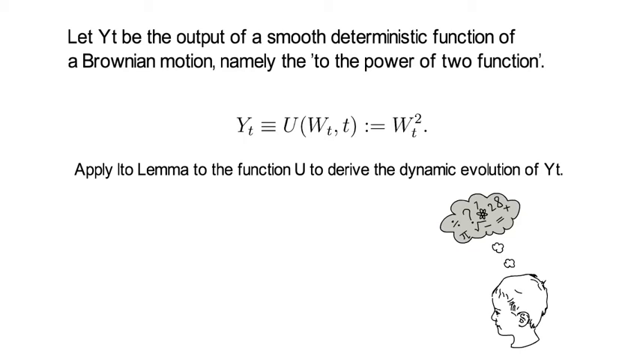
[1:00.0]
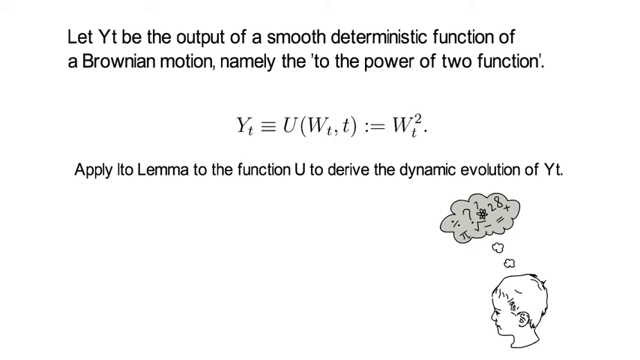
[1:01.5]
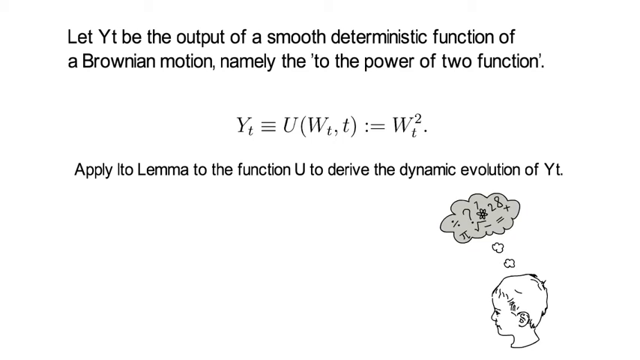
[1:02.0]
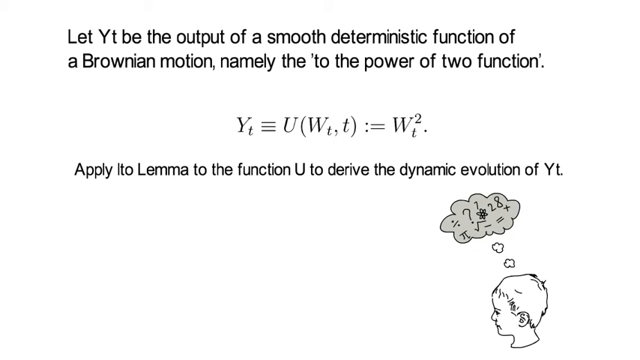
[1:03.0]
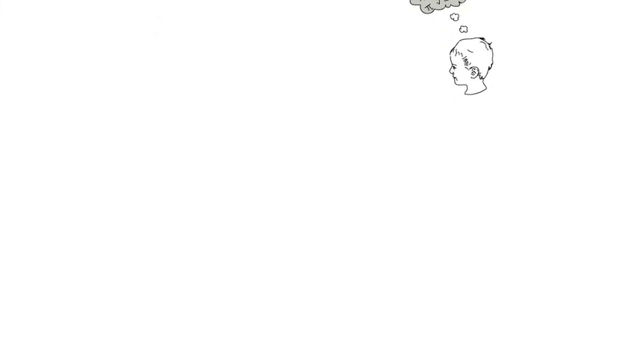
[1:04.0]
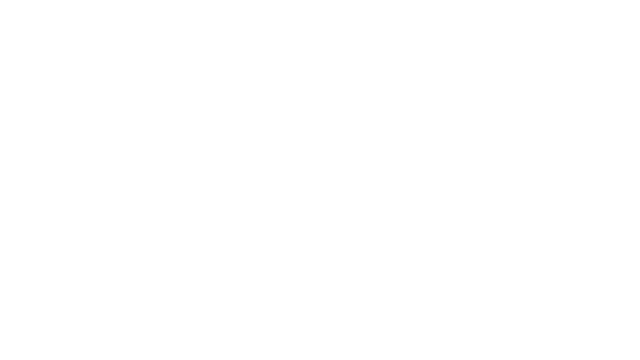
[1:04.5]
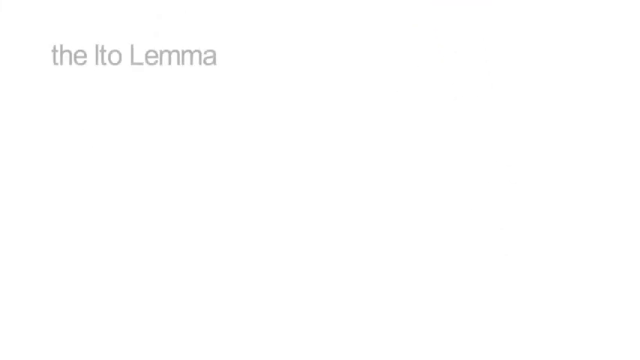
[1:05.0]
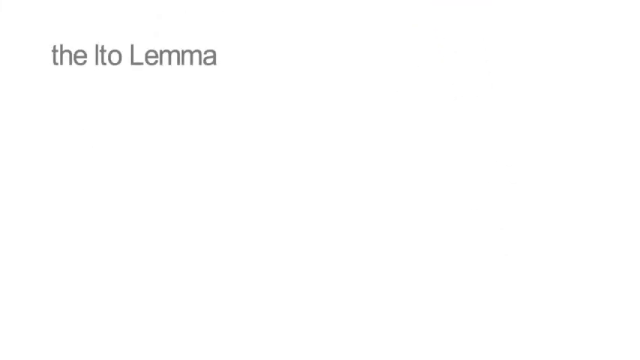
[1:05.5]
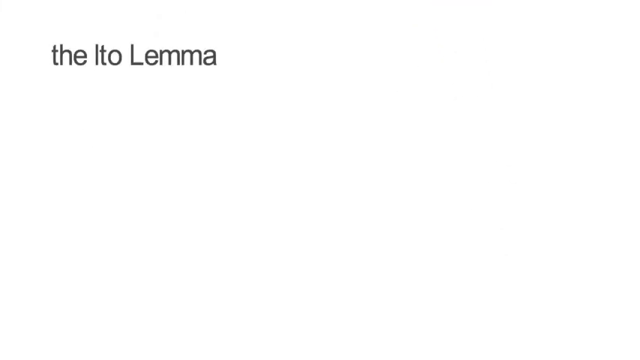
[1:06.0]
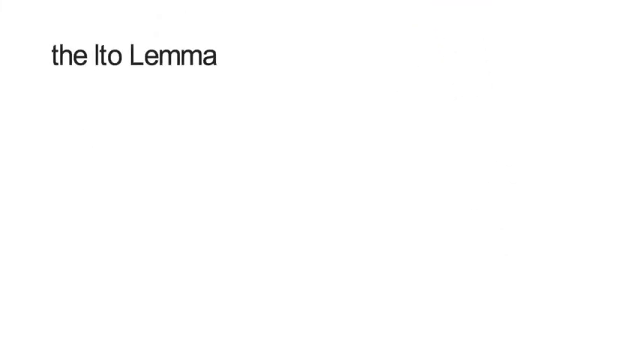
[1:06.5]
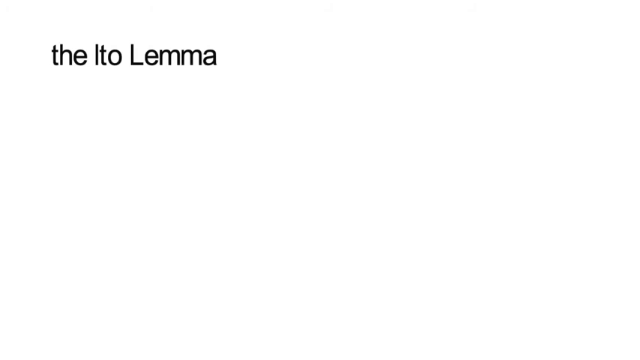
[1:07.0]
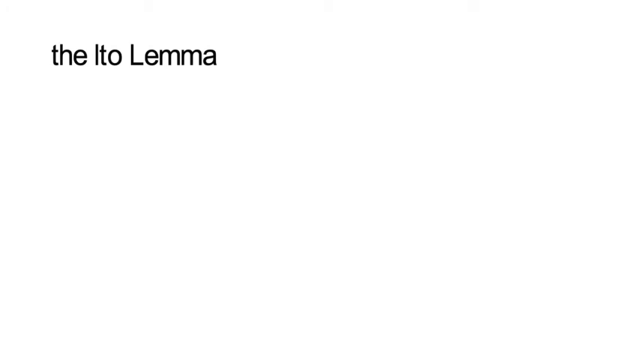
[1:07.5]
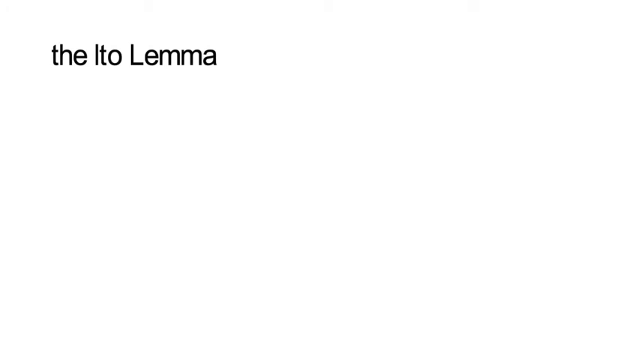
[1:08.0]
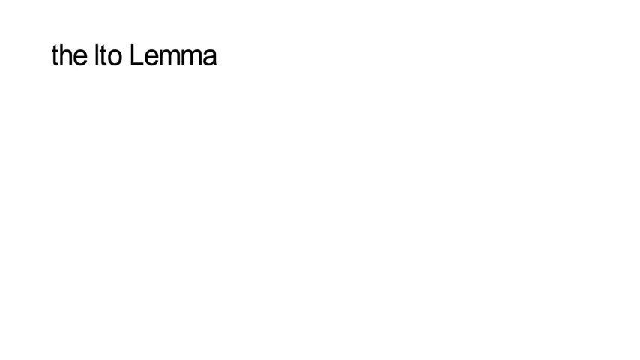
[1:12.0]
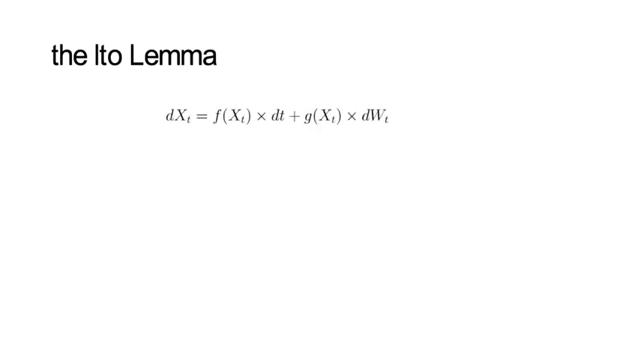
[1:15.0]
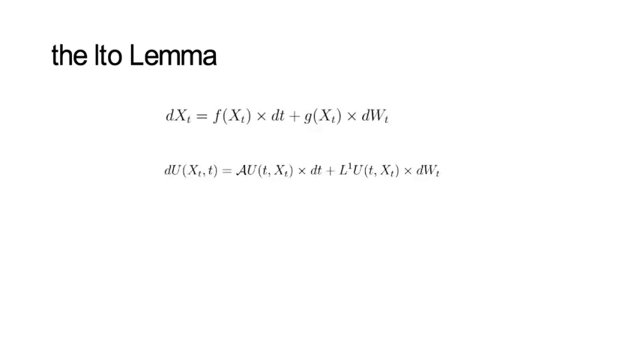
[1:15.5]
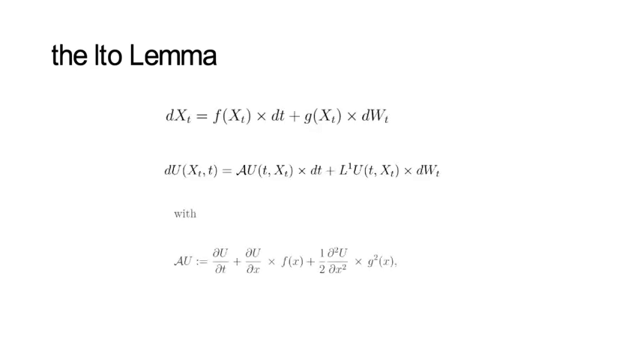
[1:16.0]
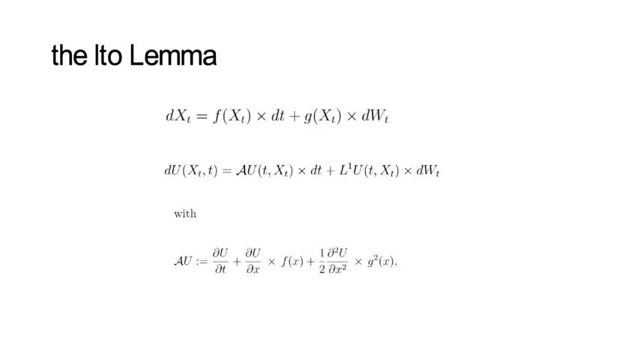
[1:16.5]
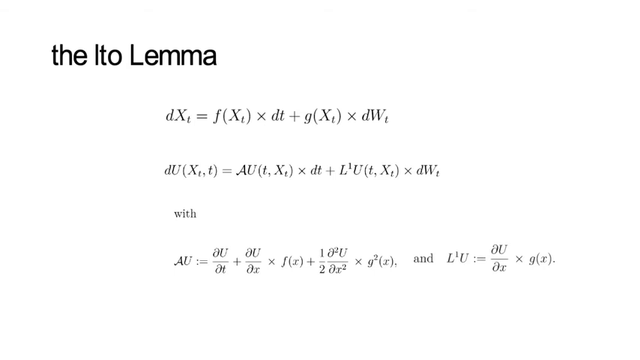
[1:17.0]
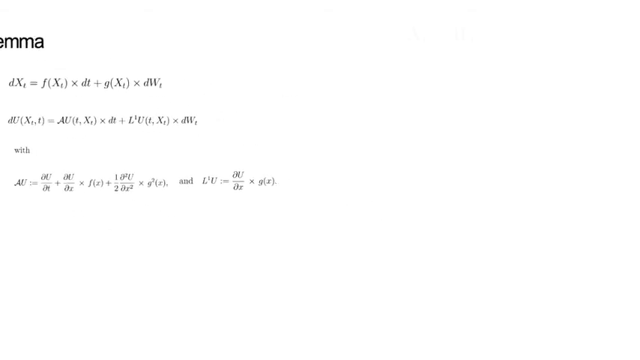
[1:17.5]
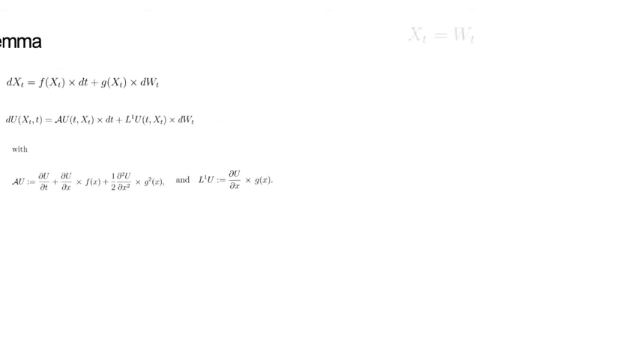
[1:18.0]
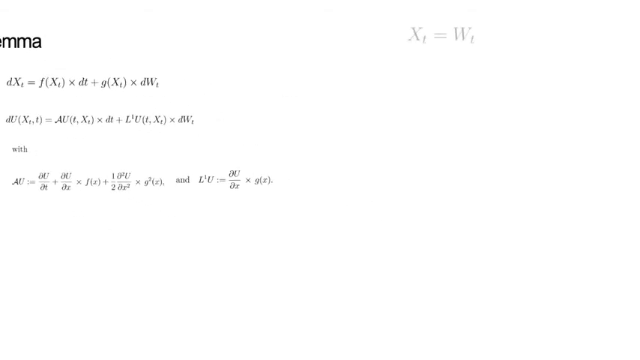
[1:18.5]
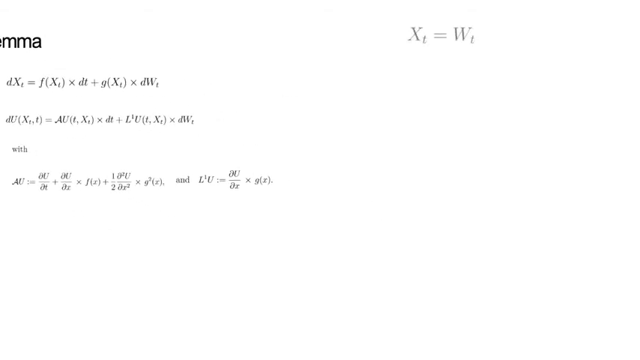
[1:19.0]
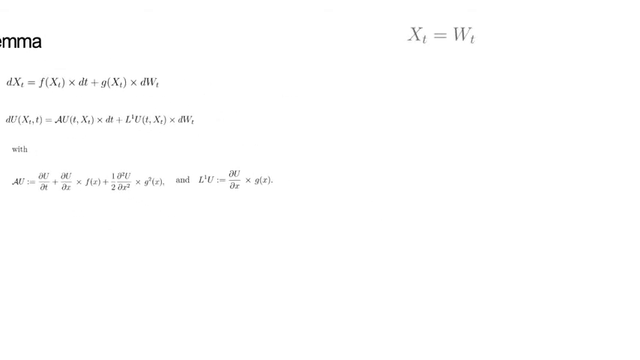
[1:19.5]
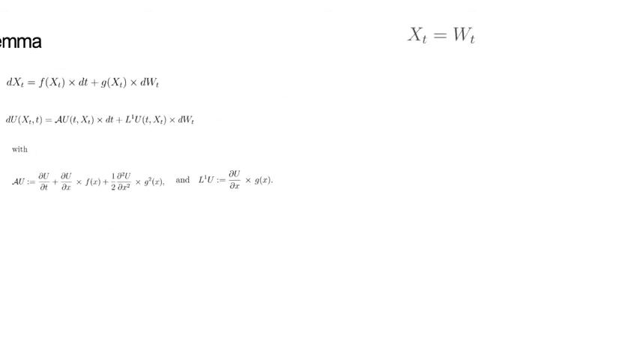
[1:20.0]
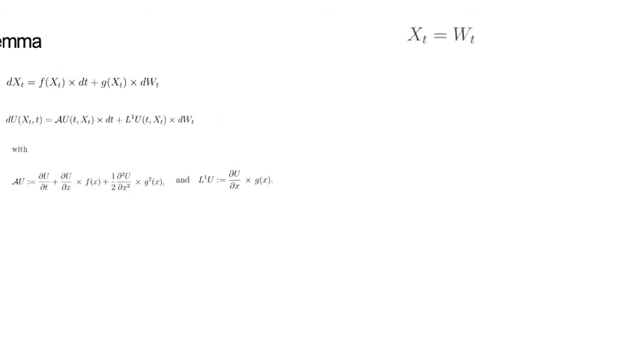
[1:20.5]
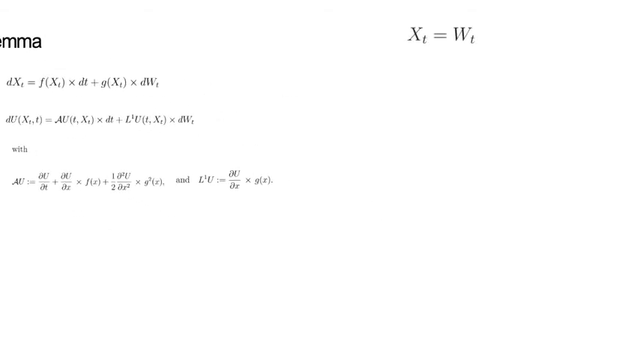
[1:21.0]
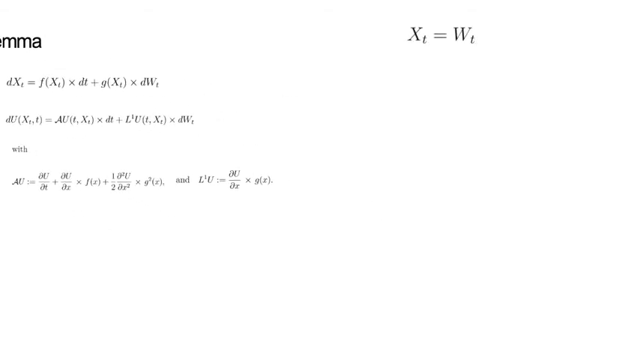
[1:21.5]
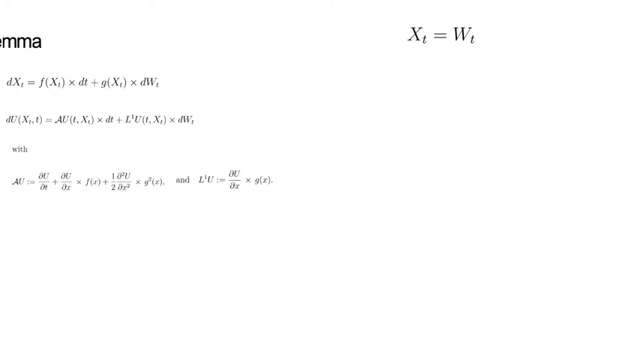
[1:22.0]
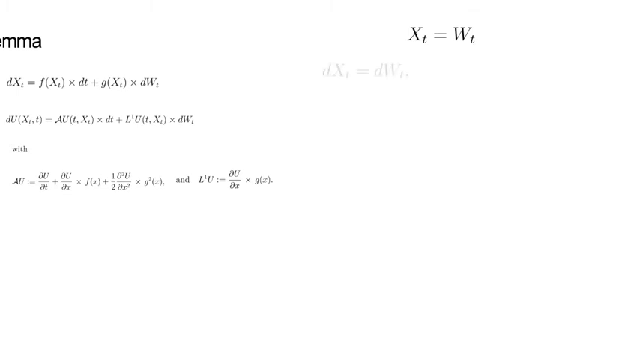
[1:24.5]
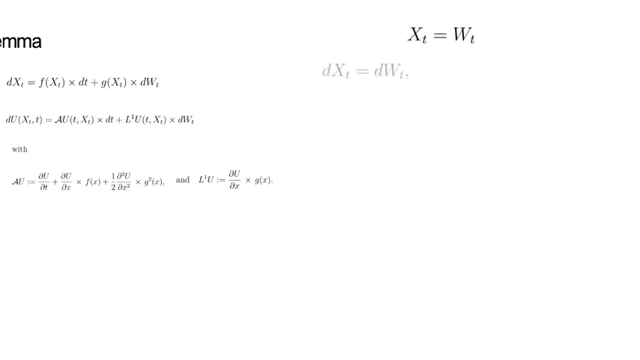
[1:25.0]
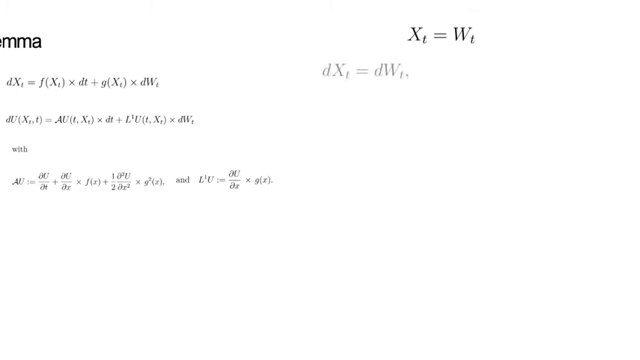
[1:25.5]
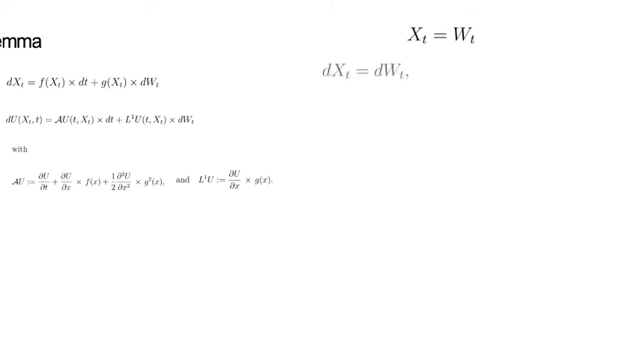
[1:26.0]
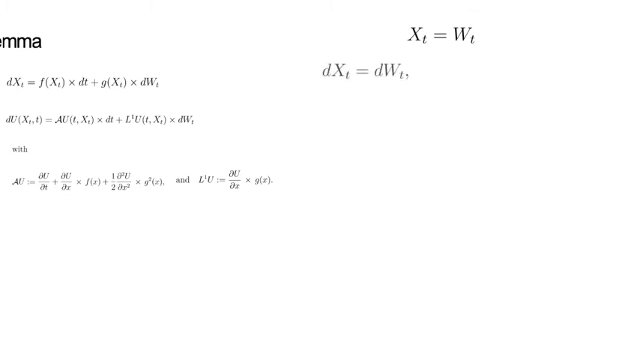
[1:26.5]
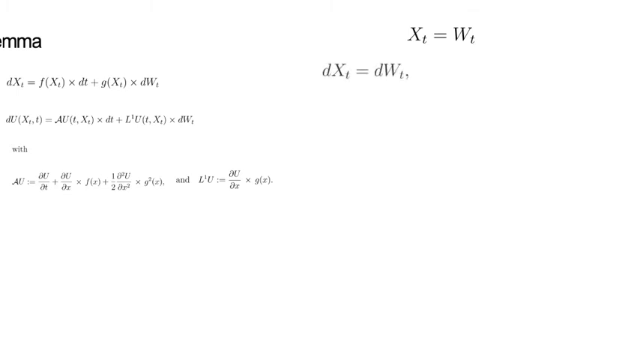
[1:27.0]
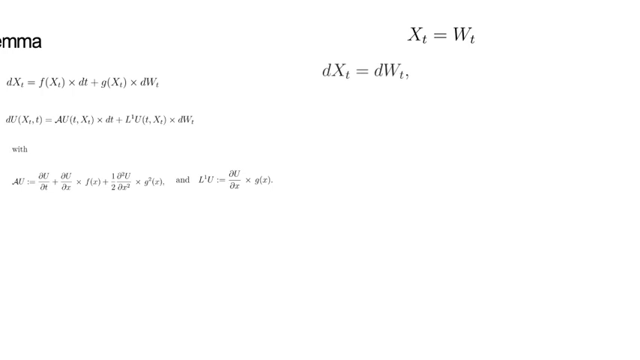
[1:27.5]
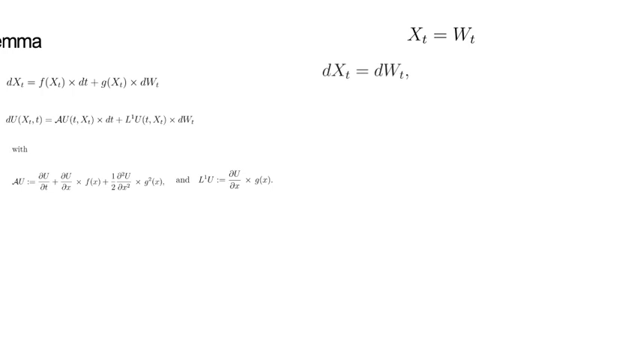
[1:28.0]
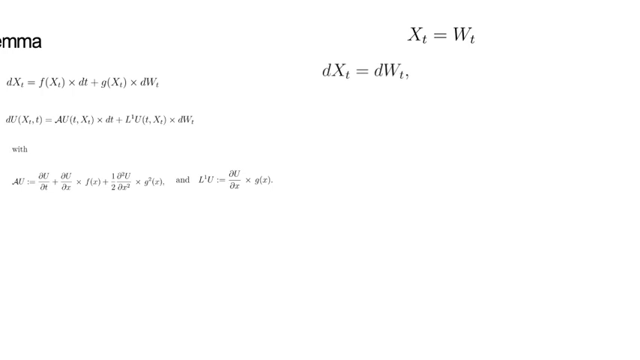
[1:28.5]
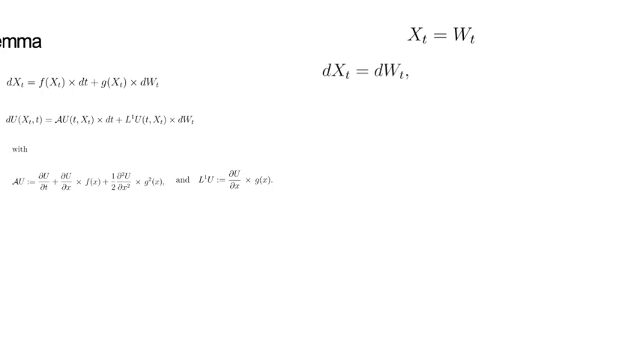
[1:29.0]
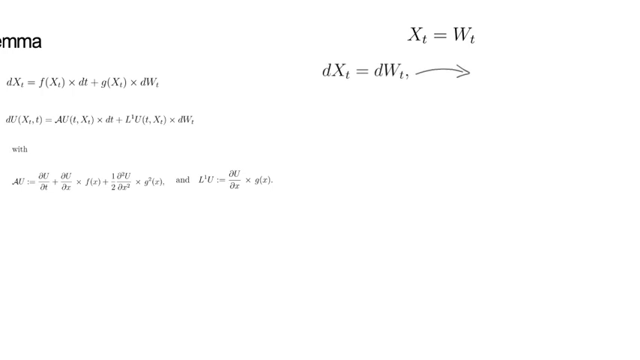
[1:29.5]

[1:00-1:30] The slide content slides up and out of the screen. "LTO lemma" now appears on the first line, followed by very detailed mathematical formulas applying the concept: d x t equals f of x t times d t plus g of x t times d w t, and d u of x t and t equals A u of t, x t times d t plus L to the power of one u of t, x t times d w t, with A u resulting in a summation of a couple of fractions times f of x plus one over two of a fraction times g squared of x. Another condition follows. The text then moves to the left side of the screen, and on the right side appear x of t equals w of t and d x of t equals d w of t, with the final line leading through an arrow to something else.